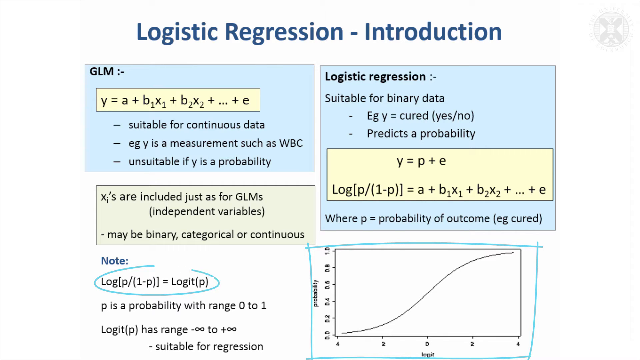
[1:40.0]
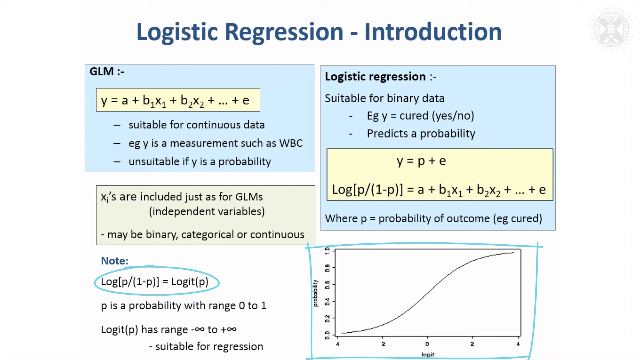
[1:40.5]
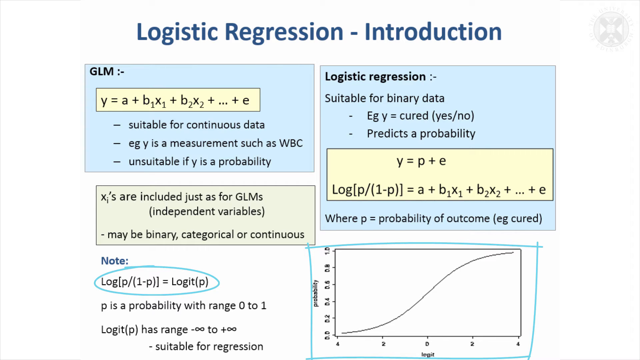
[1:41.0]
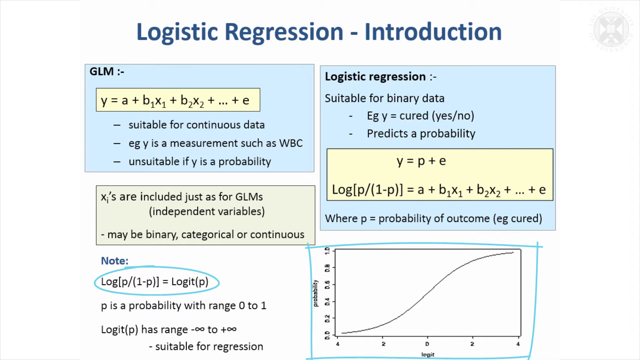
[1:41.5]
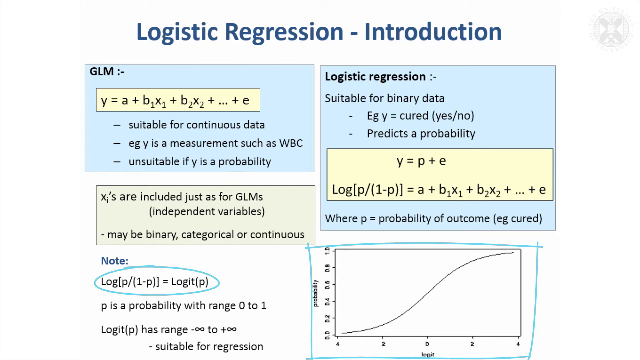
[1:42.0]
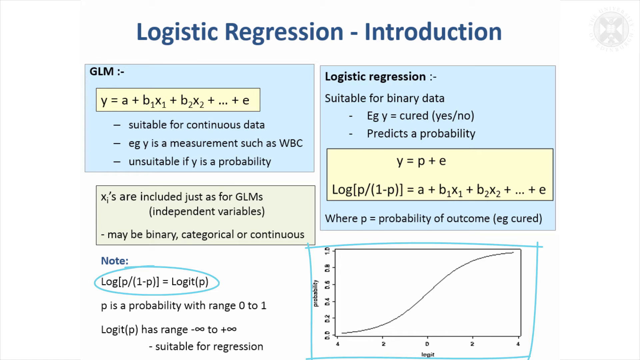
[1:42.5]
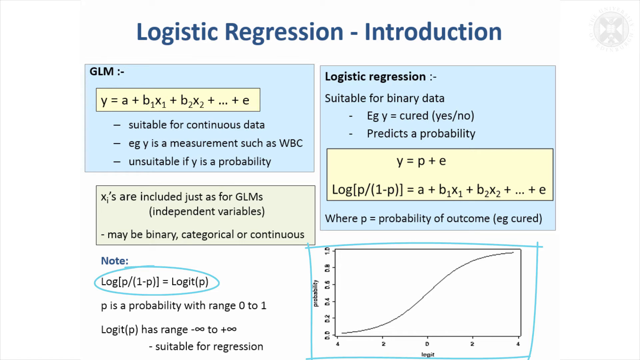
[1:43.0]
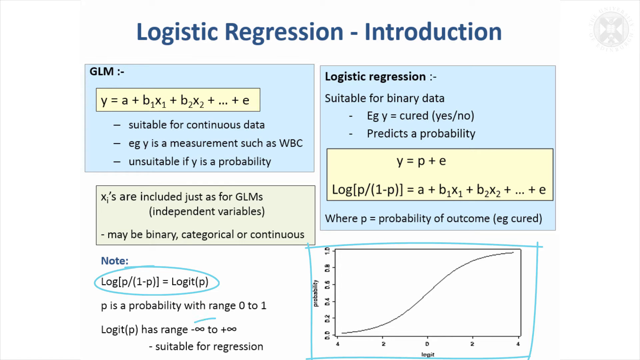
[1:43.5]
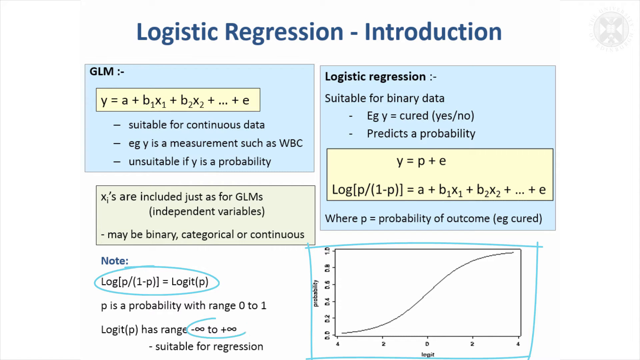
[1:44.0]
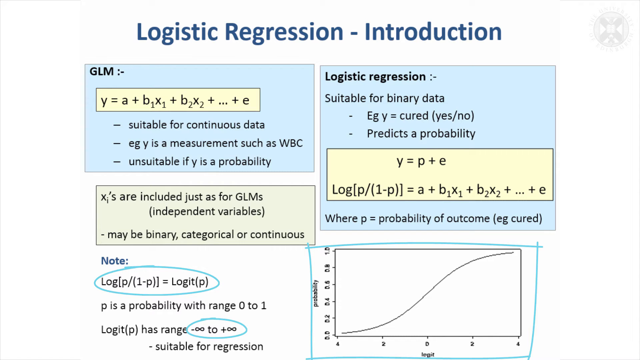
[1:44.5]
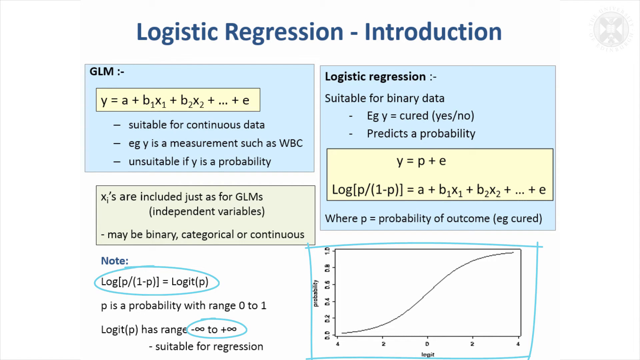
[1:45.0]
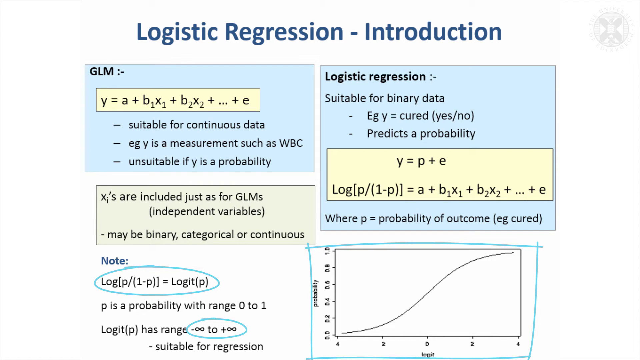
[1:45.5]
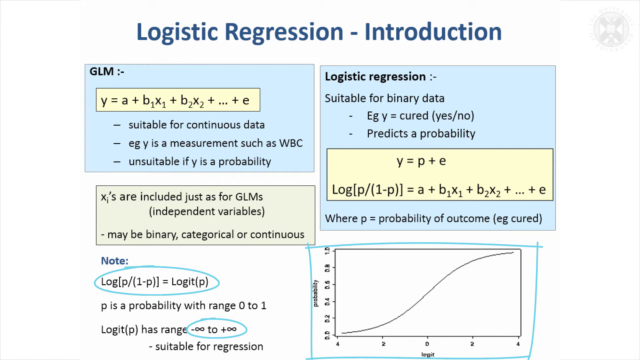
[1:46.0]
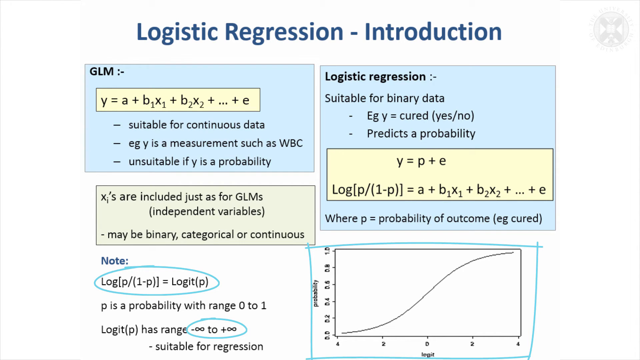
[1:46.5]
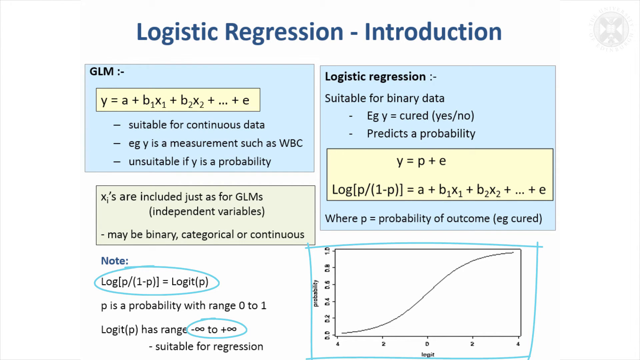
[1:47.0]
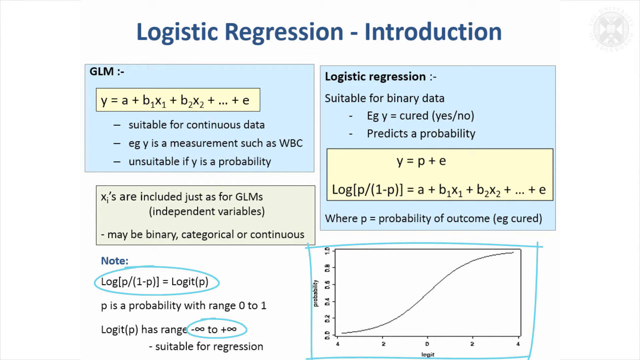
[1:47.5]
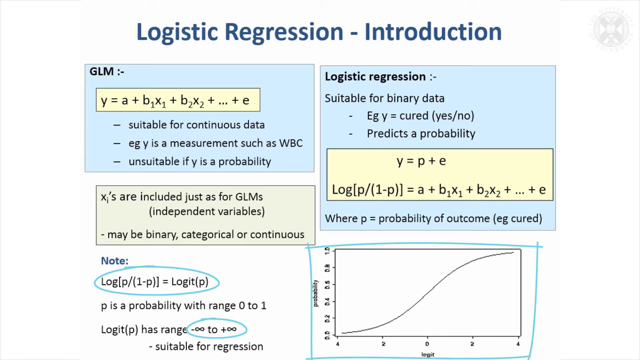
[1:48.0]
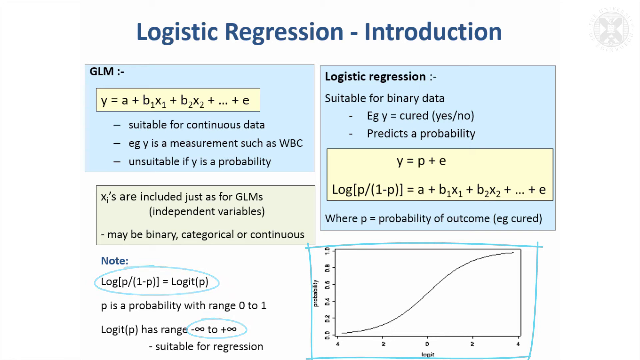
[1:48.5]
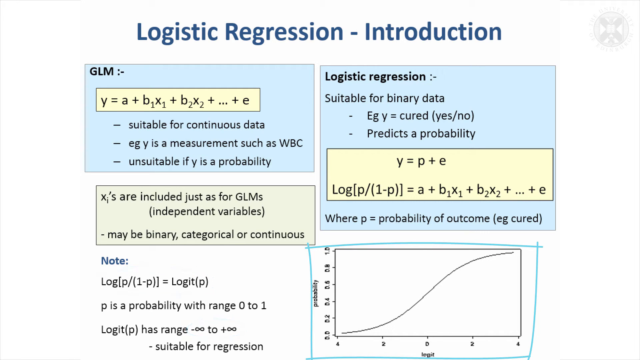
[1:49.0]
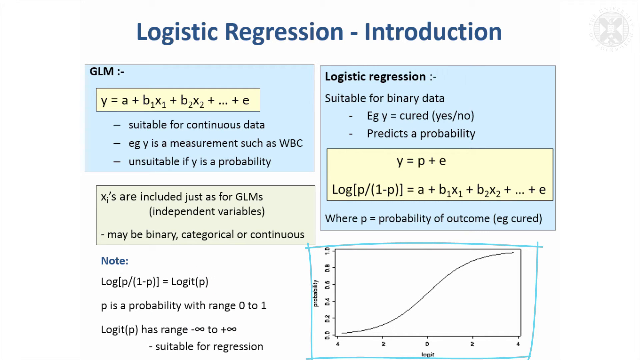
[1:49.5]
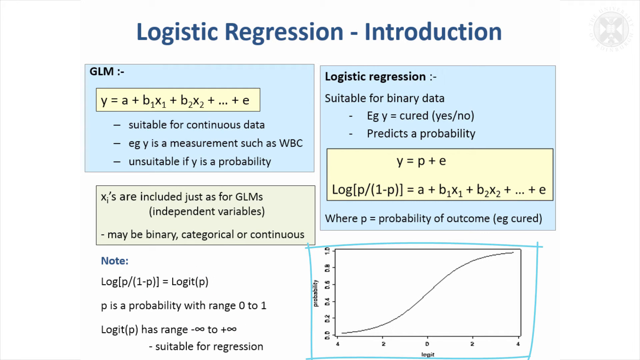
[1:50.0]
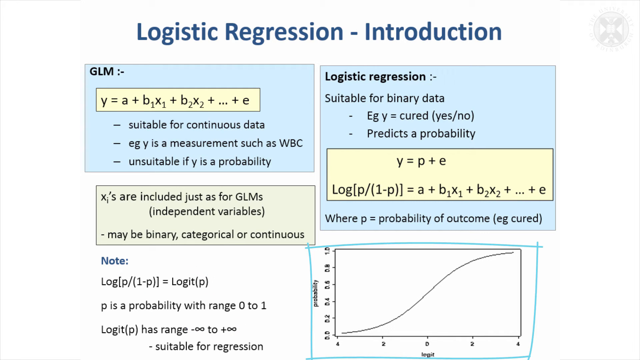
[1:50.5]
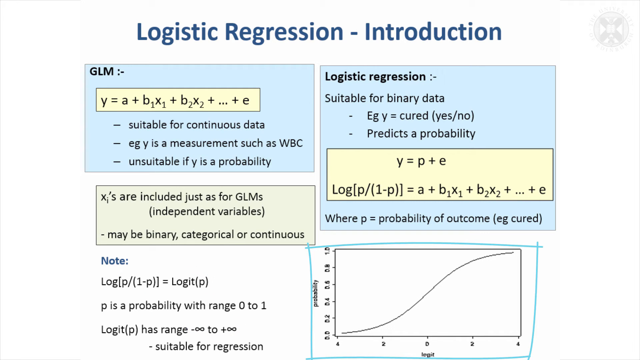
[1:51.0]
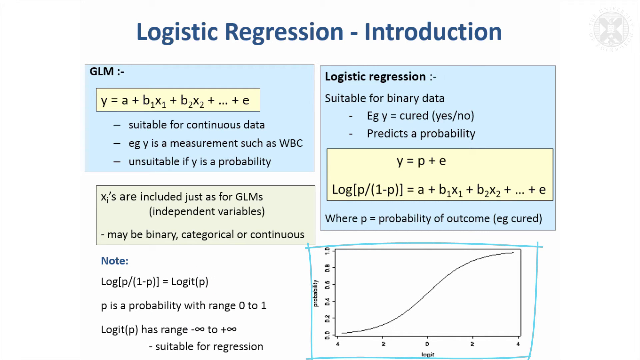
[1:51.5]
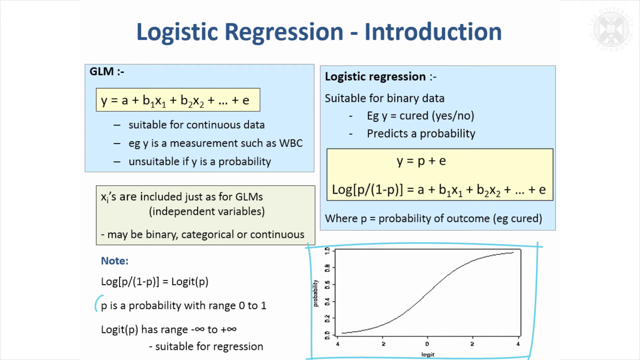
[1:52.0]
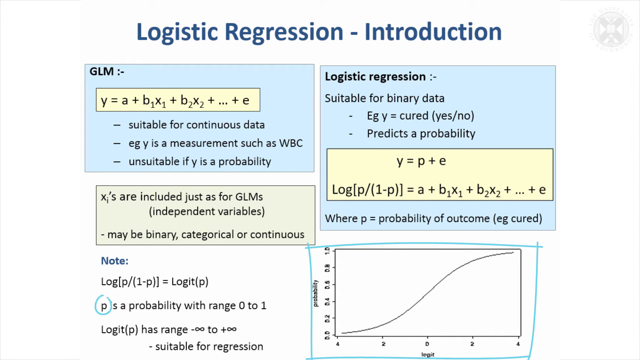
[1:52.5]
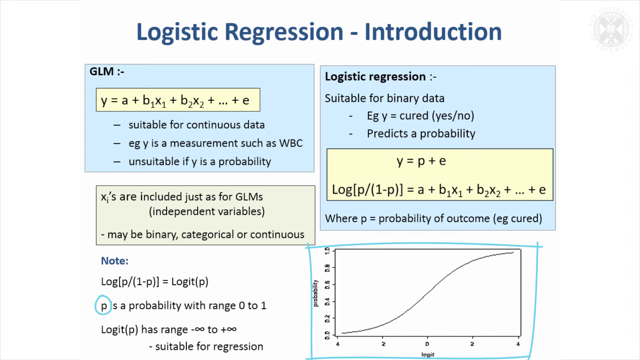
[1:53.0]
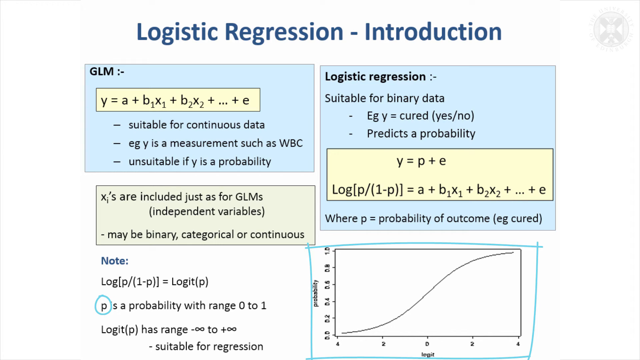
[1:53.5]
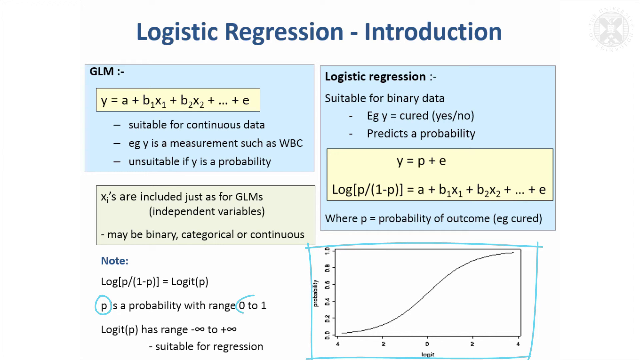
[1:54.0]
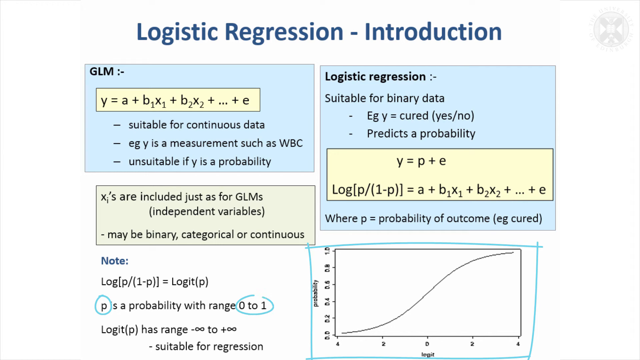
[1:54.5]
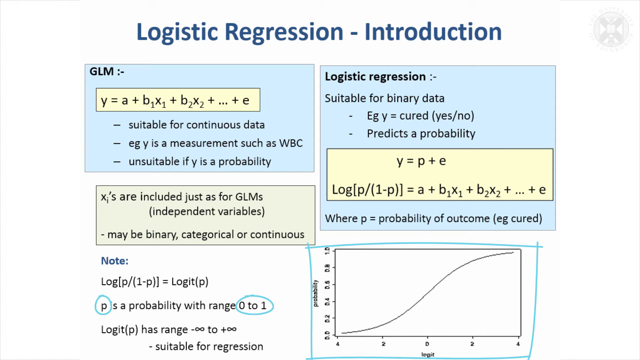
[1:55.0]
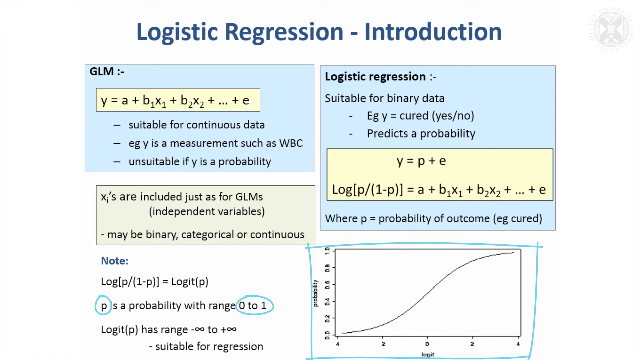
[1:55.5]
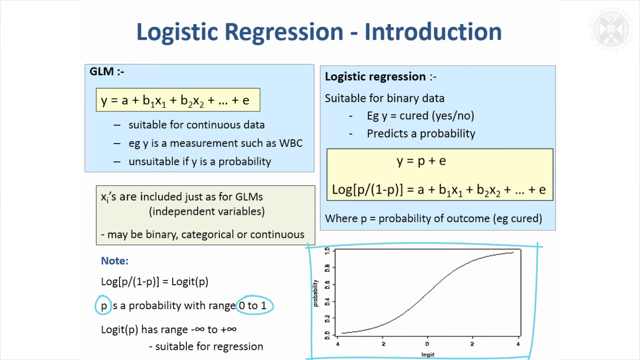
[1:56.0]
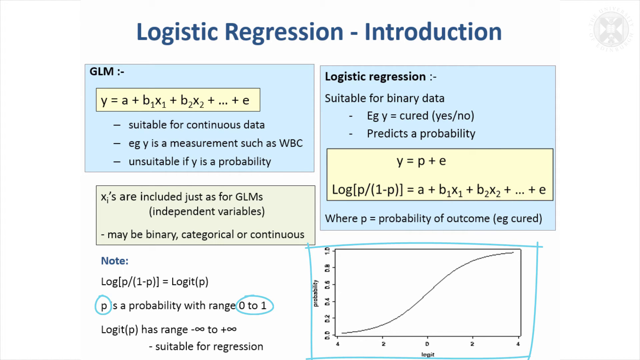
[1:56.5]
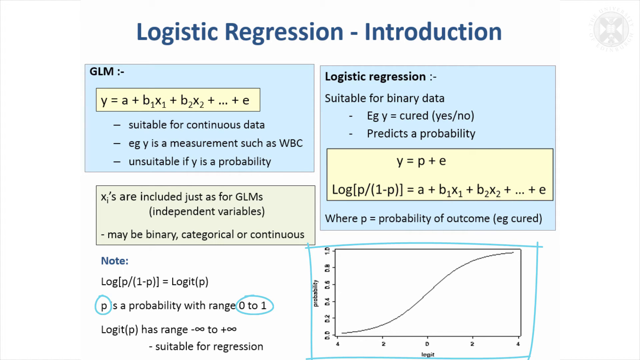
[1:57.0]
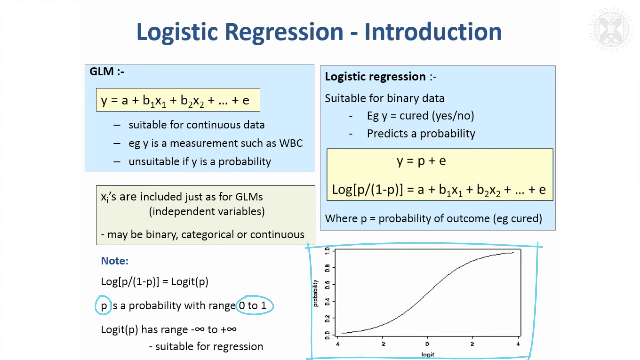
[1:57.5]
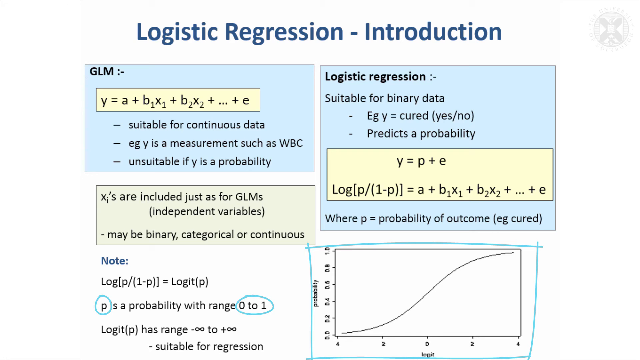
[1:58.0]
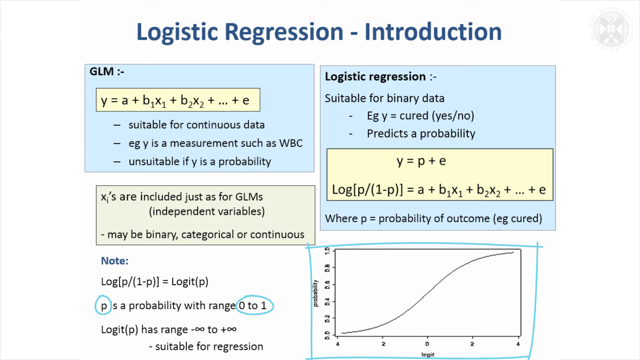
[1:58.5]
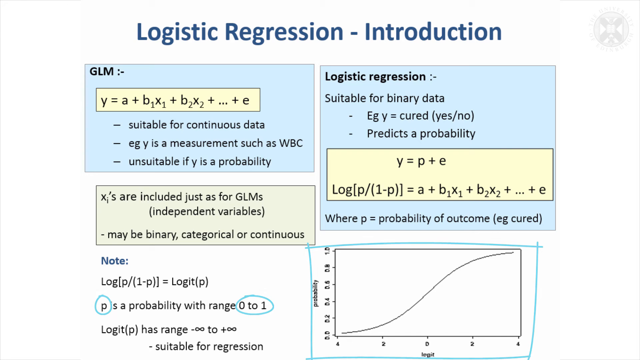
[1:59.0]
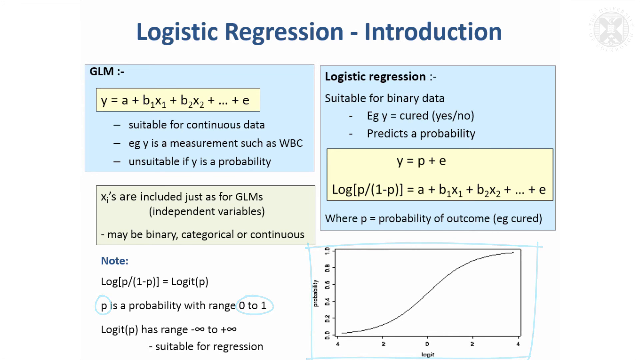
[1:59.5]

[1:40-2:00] The mathematics content is all on a white background, with the topic being the introduction to logistic regression. The user explains a graph whose line rises and rises, then levels off at a certain point; it plots probability against height. To the right of the graph is a note reading log(p/(1 − p)) = logit(p), continuing with "p is a probability with a range 0 to 1", "logit(p) has a range negative infinity to positive infinity" and "suitable for regression". The user explains the formula part, then the negative infinity to positive infinity part. A blue circle is drawn around the 0 to 1 part, apparently as the user explains it. Finally, the user explains the graph at the bottom right of the screen.